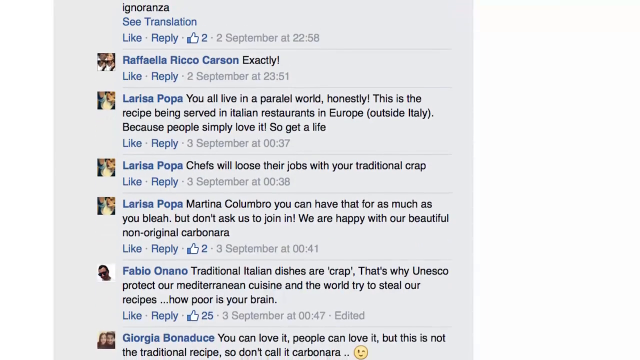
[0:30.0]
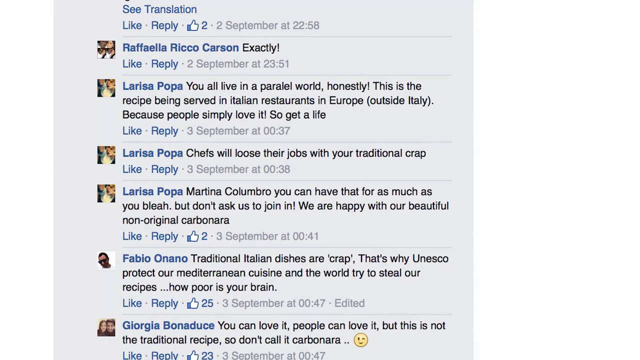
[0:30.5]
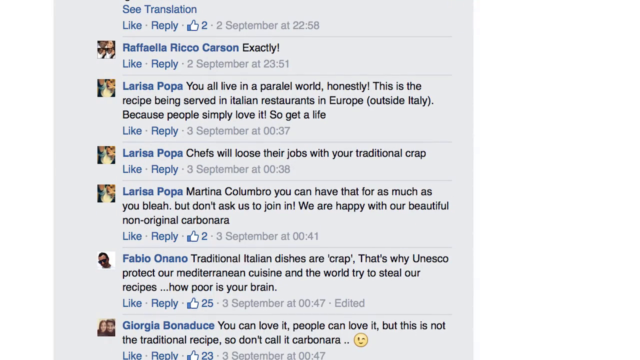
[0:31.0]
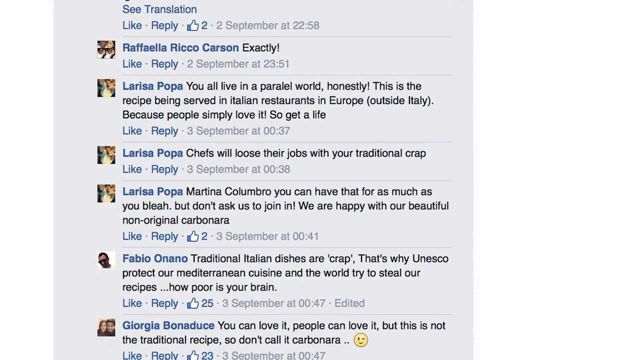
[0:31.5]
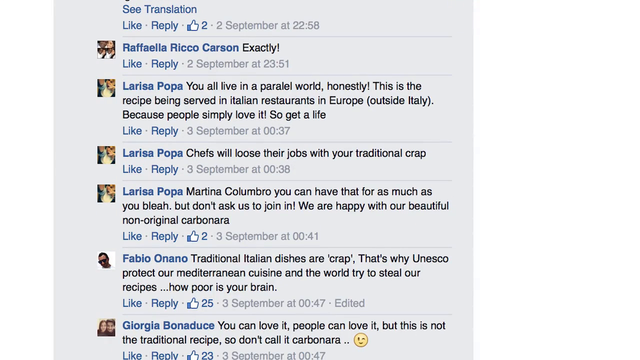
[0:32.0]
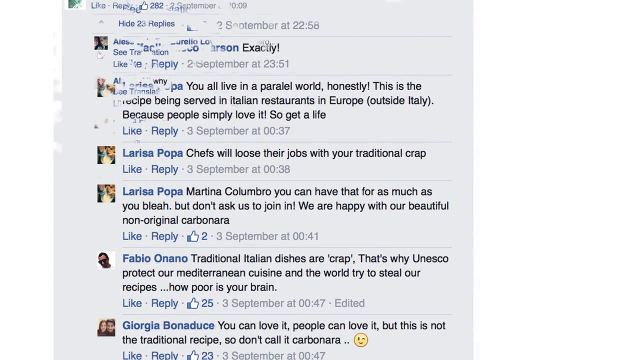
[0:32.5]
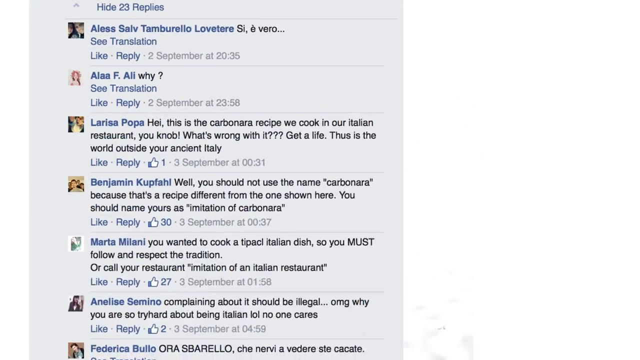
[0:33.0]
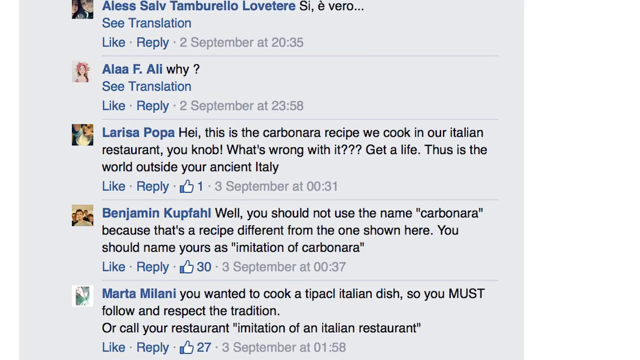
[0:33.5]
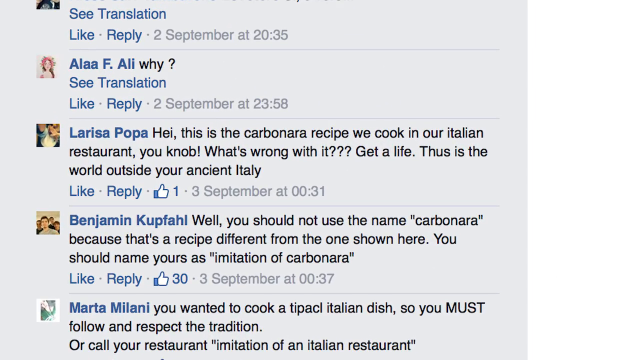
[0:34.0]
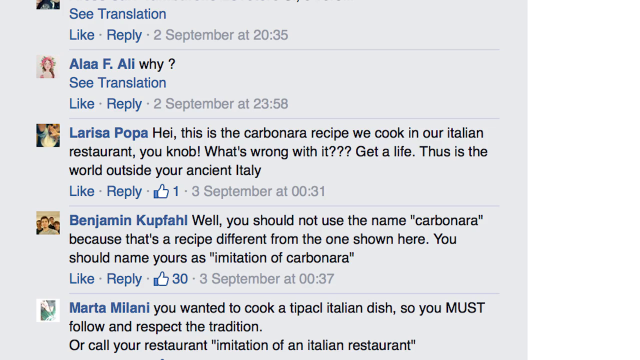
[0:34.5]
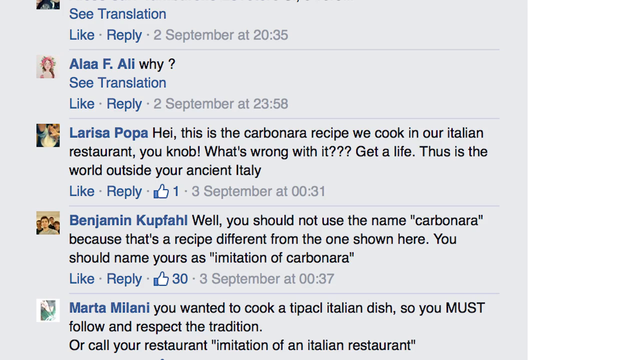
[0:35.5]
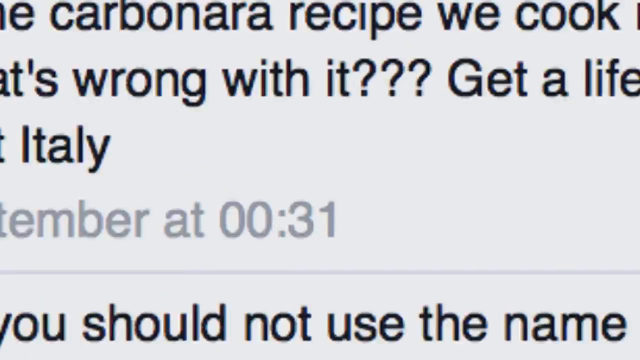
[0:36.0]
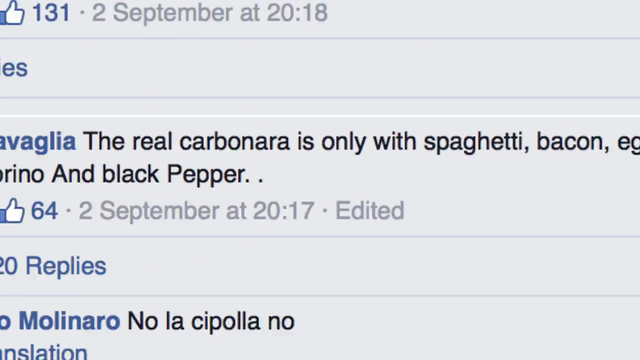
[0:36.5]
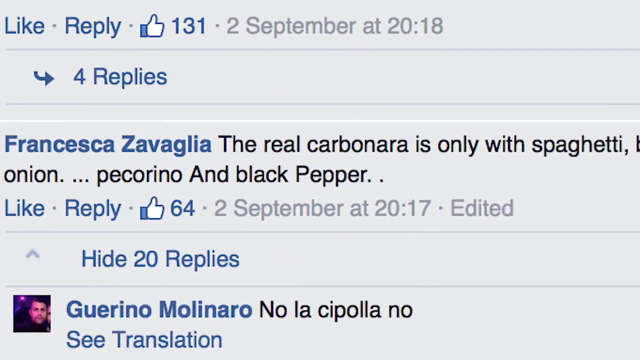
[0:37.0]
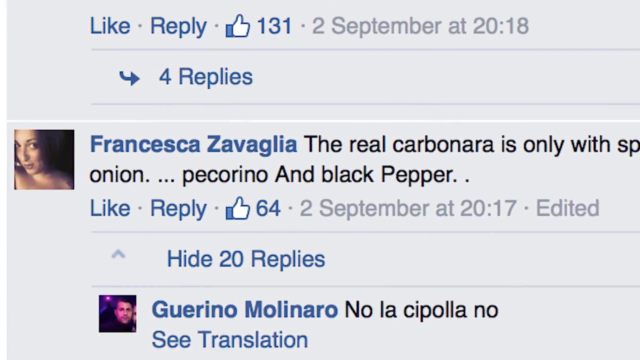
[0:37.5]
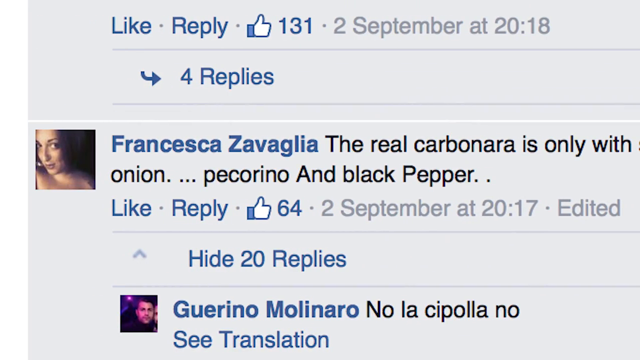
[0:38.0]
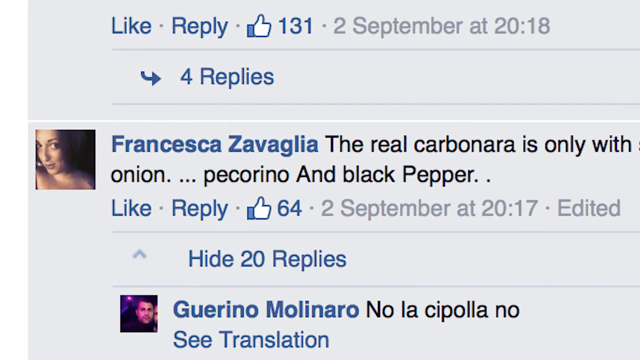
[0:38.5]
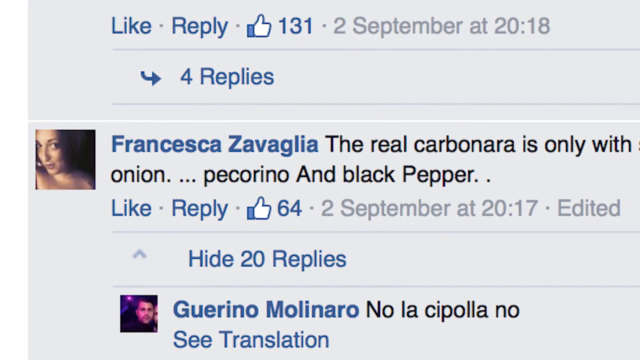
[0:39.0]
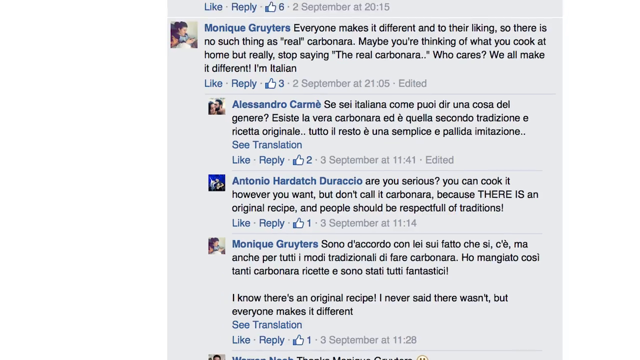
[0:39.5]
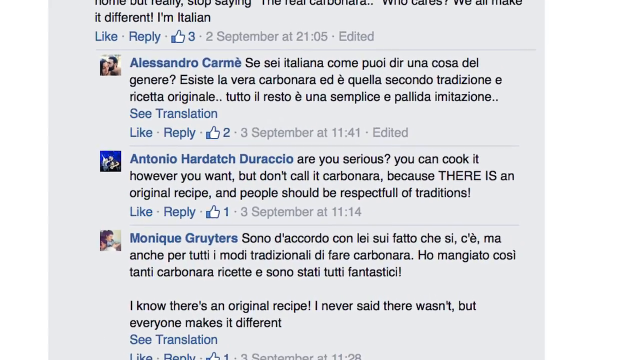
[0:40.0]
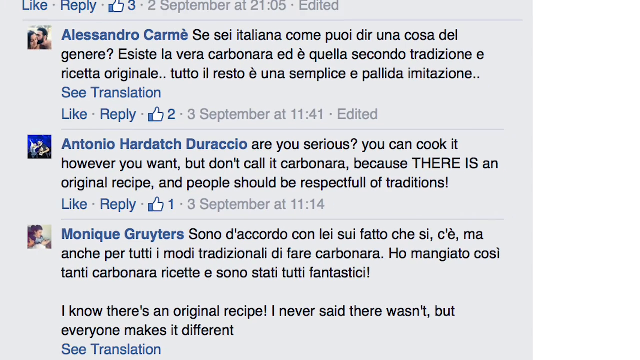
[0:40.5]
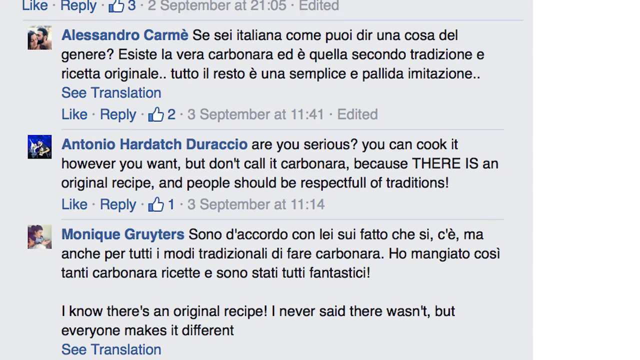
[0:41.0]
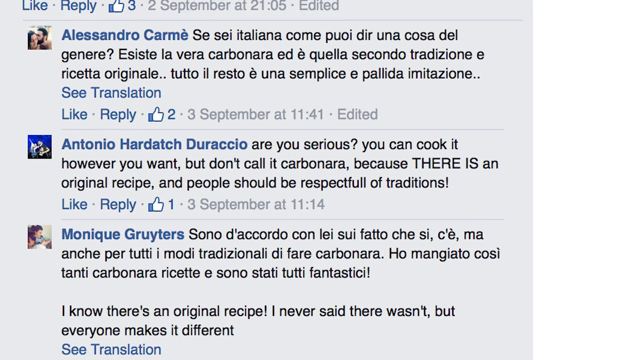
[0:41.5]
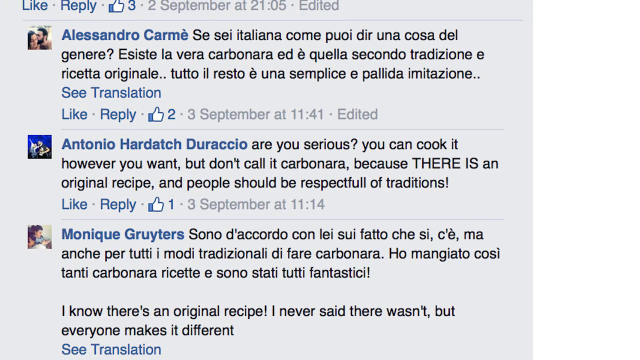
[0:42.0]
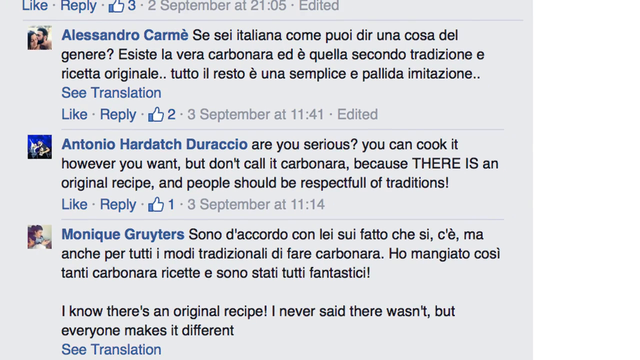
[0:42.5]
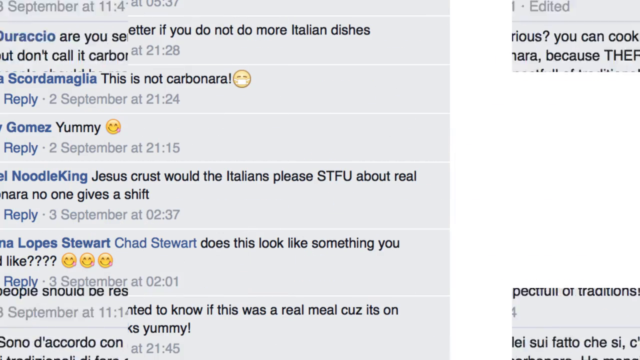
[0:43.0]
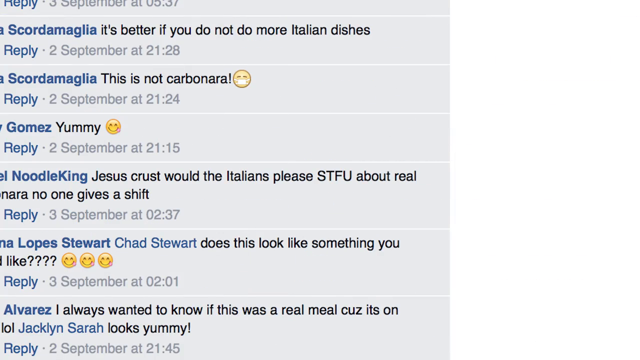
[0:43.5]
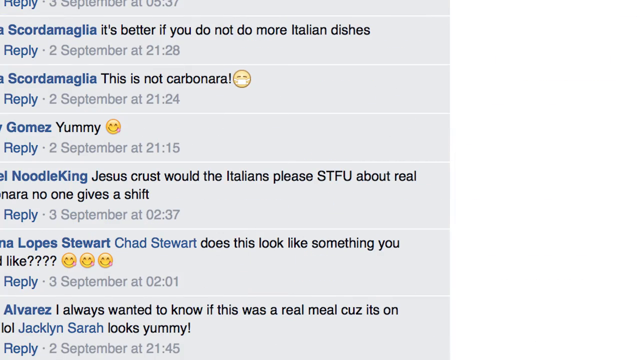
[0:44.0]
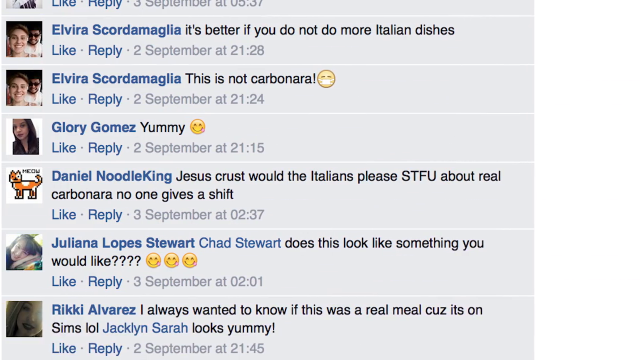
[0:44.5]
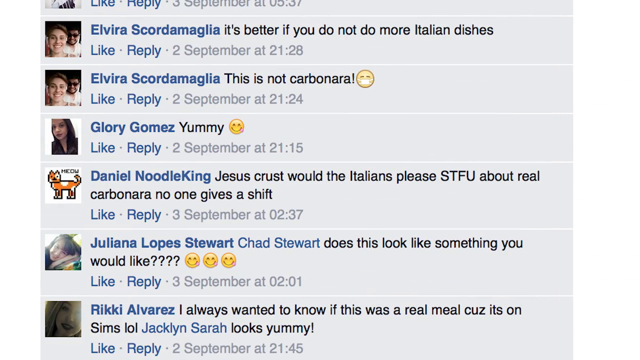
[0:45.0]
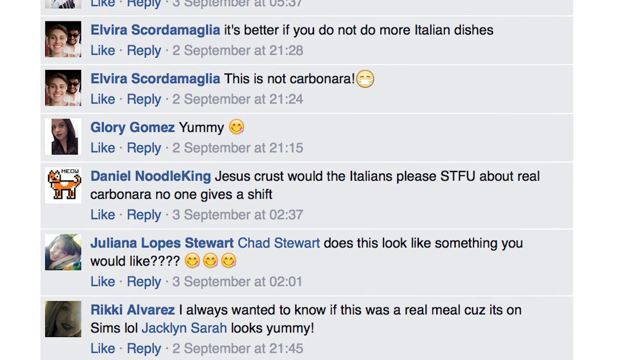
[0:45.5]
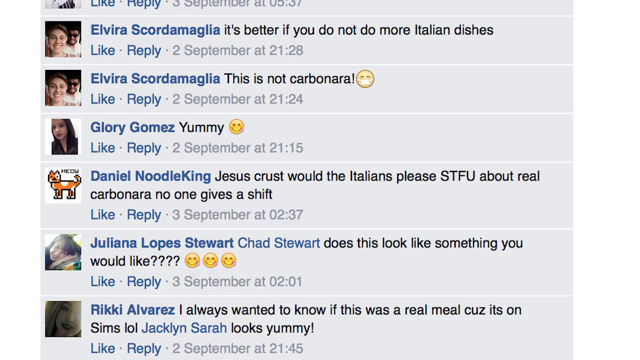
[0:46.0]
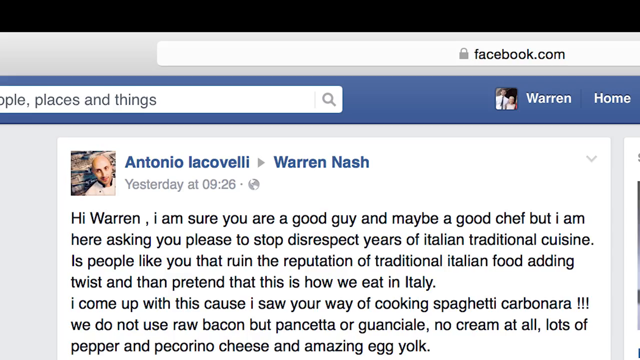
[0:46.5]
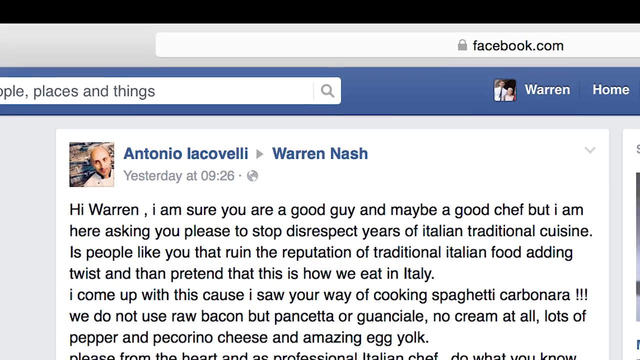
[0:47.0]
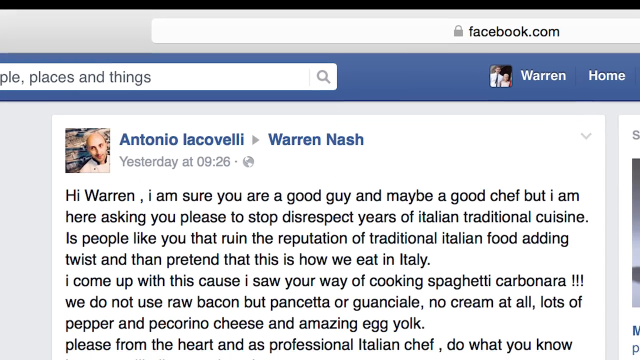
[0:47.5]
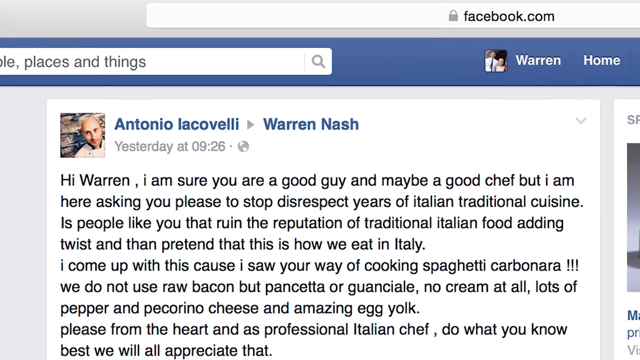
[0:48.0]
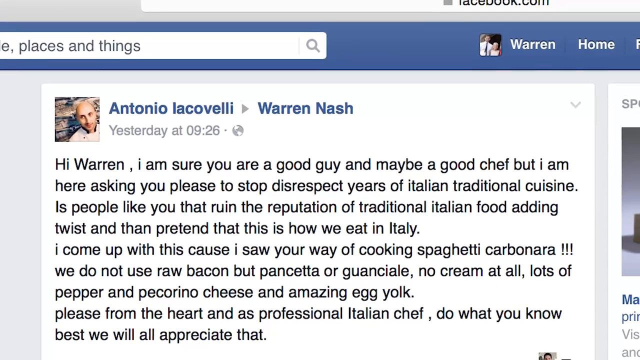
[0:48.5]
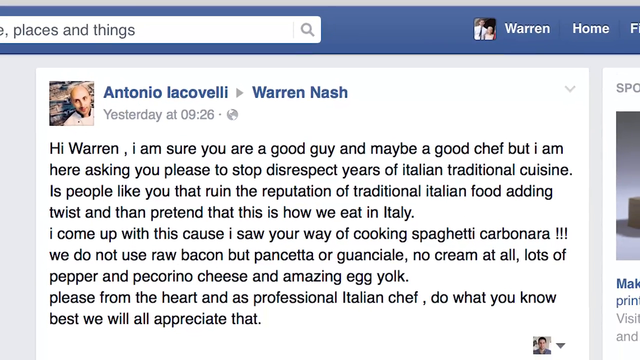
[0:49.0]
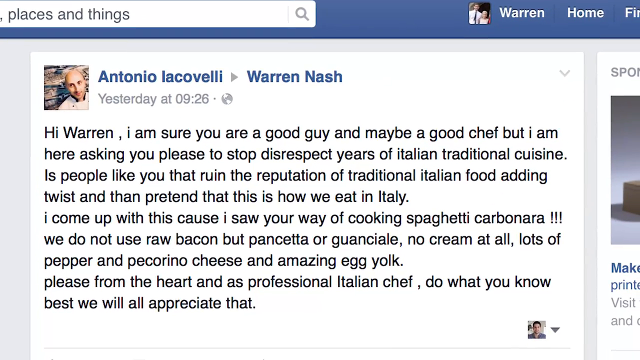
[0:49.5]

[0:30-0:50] More of the comments are shown, and they are very positive. Someone has also posted on Warren's page a message that reads: "Hi Warren, I am sure you are a good and maybe a good chef, but I am here asking you to please stop disparaging years of Italian dishes." This user seems not to be happy with the dish, asking Warren to stop disrespecting the years of Italian work that went into inventing these kinds of dishes.